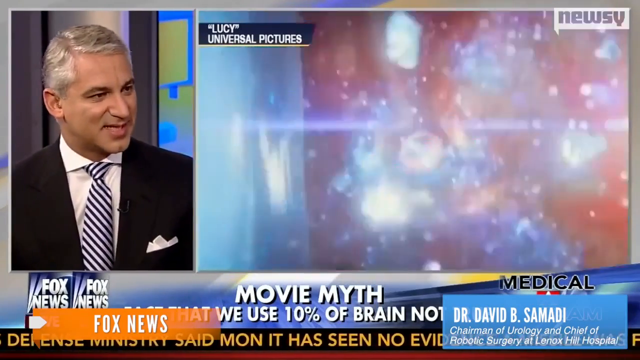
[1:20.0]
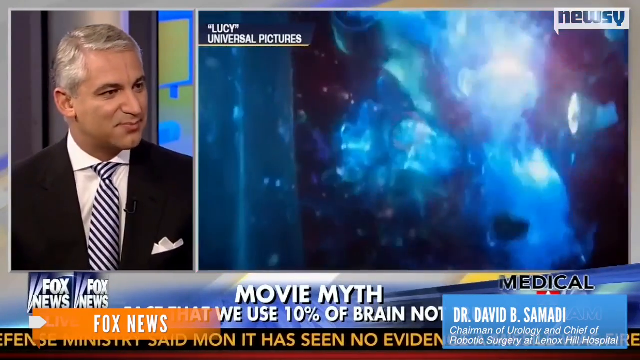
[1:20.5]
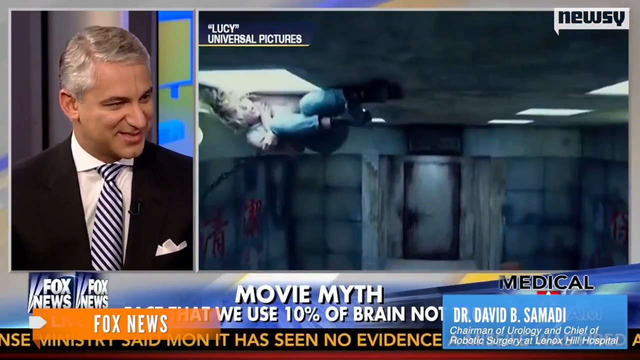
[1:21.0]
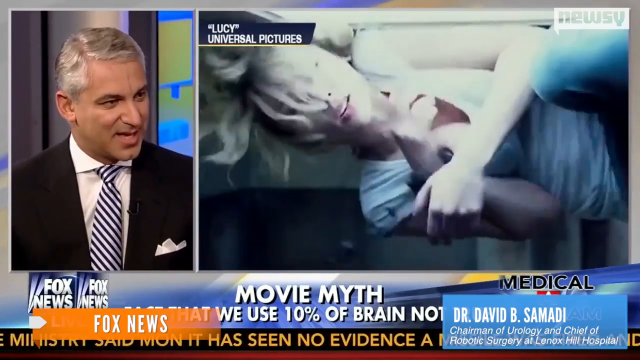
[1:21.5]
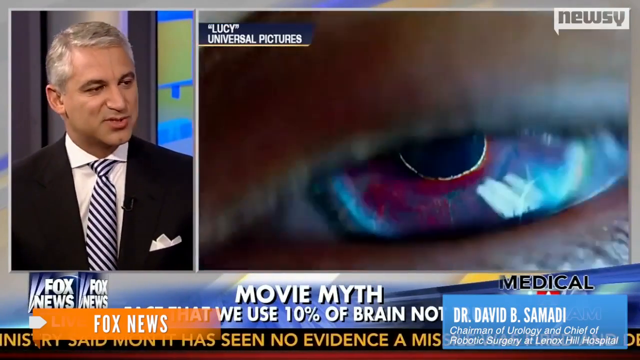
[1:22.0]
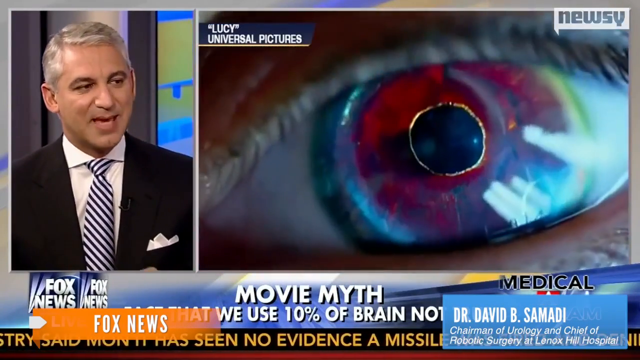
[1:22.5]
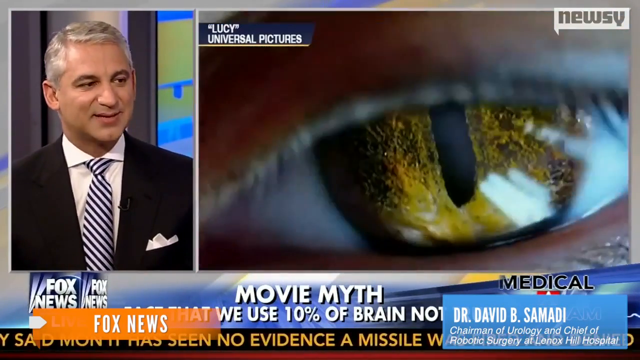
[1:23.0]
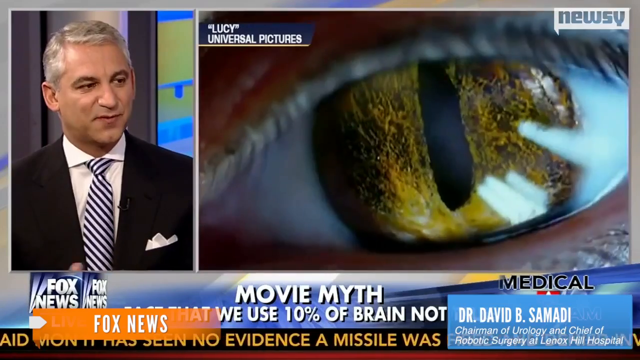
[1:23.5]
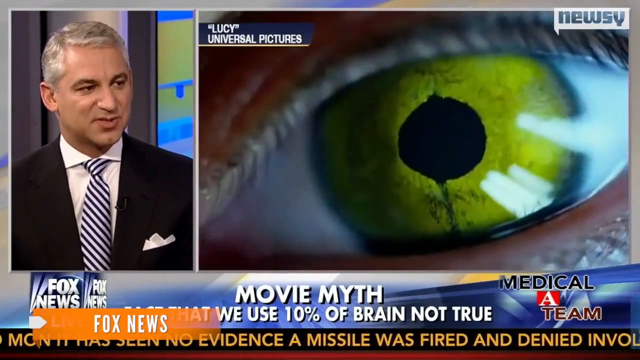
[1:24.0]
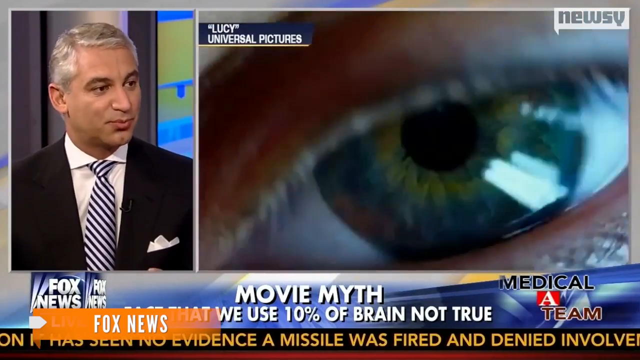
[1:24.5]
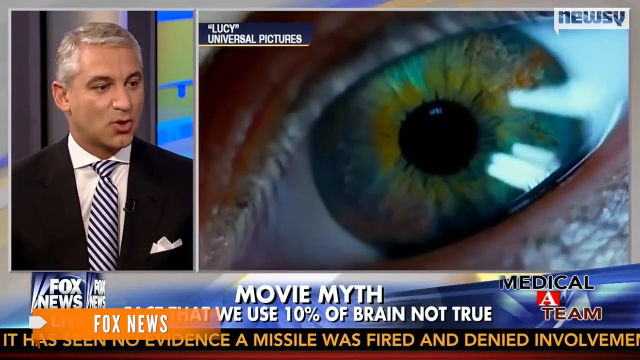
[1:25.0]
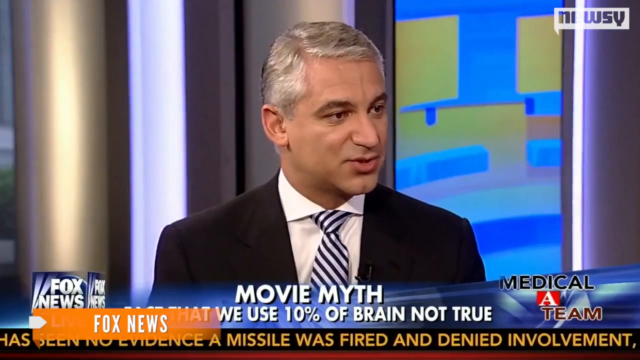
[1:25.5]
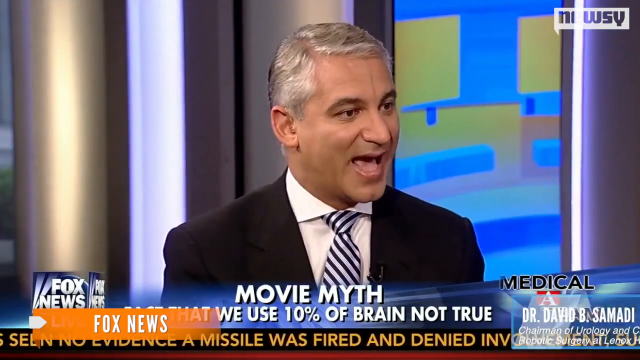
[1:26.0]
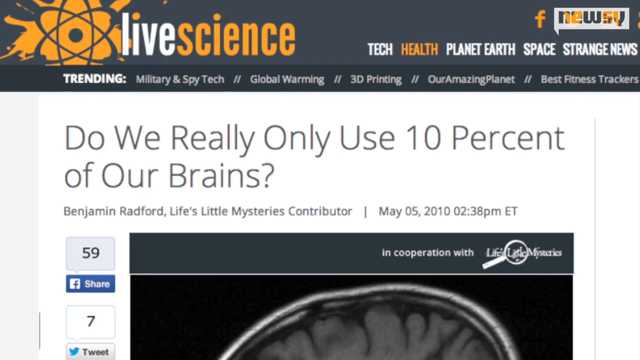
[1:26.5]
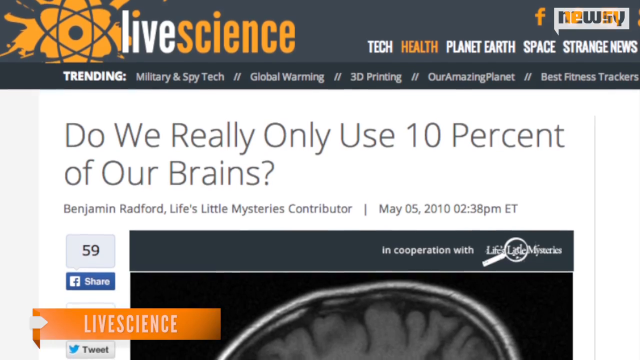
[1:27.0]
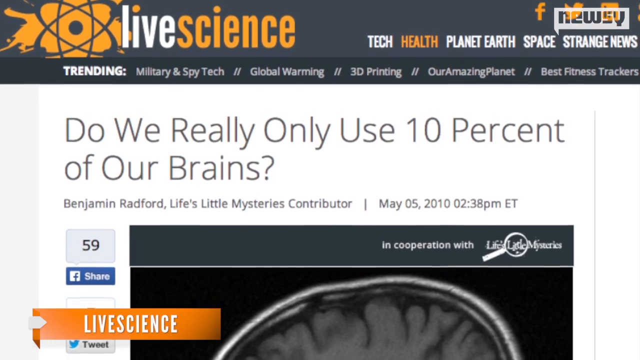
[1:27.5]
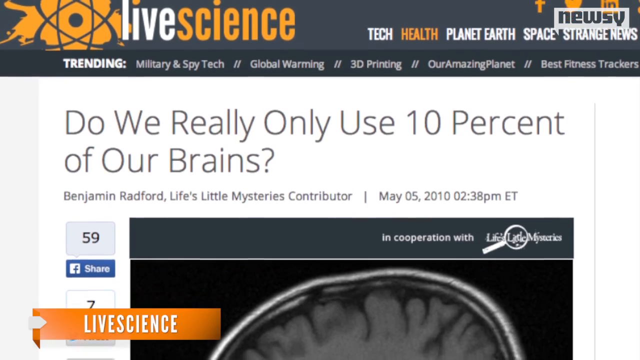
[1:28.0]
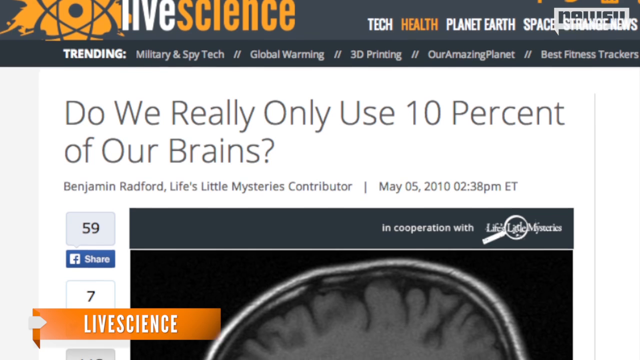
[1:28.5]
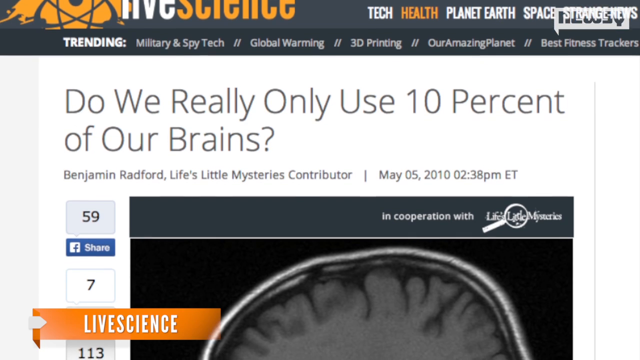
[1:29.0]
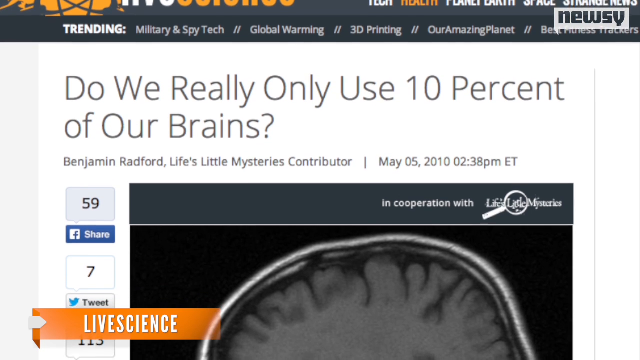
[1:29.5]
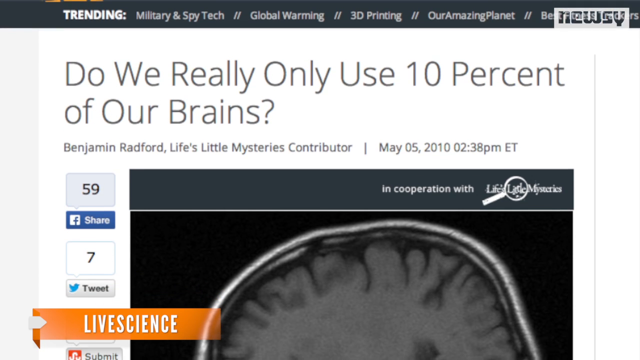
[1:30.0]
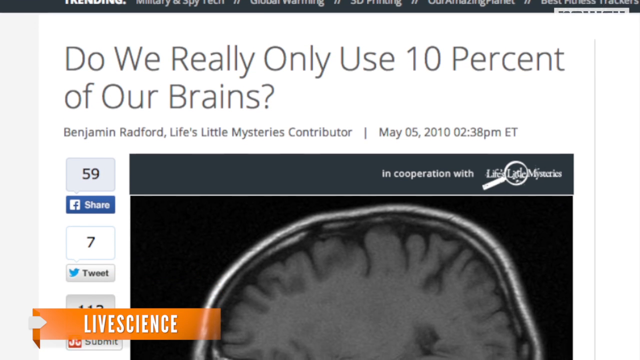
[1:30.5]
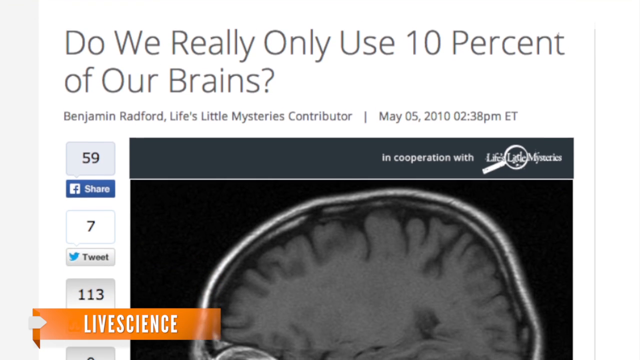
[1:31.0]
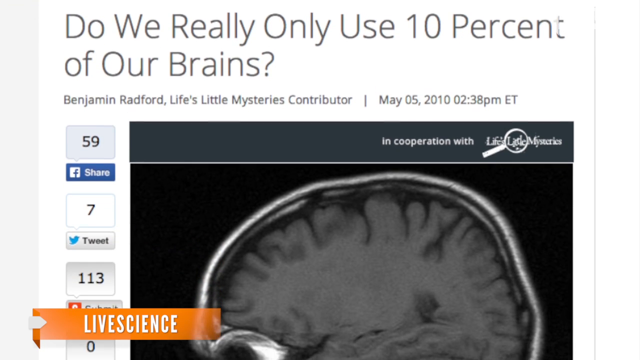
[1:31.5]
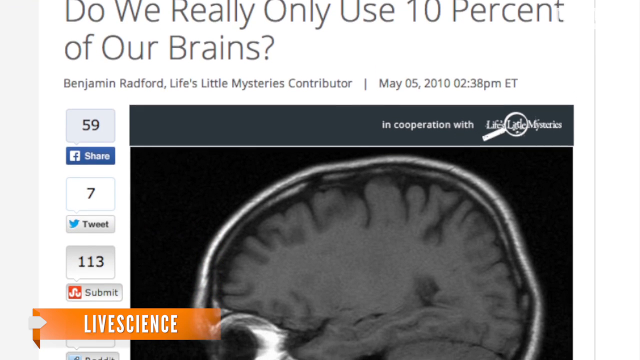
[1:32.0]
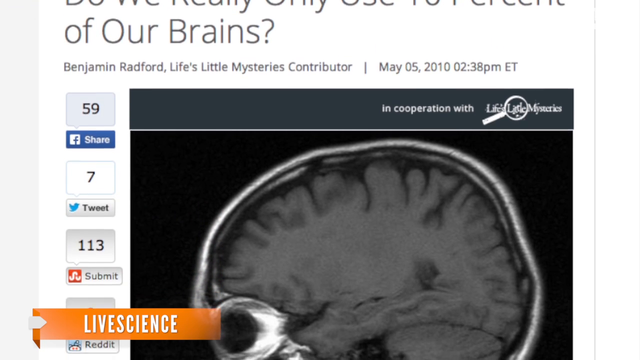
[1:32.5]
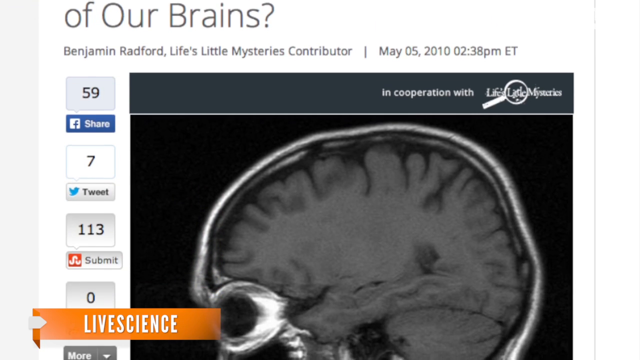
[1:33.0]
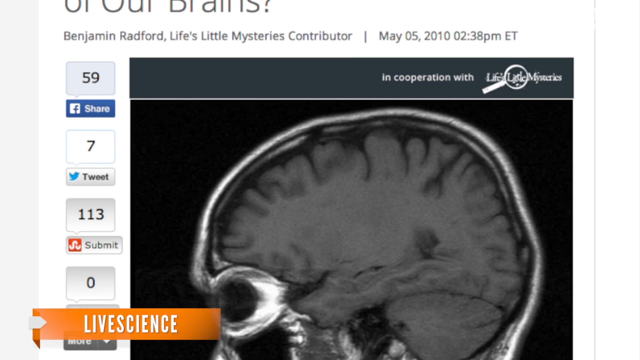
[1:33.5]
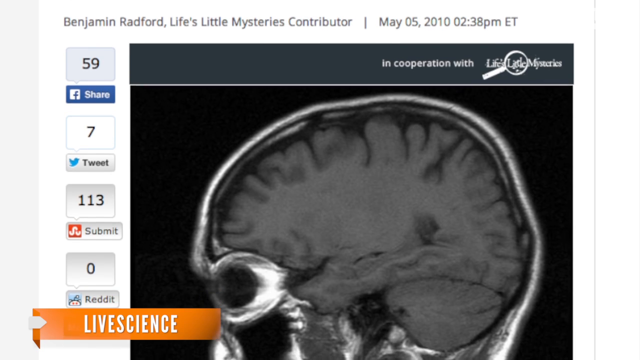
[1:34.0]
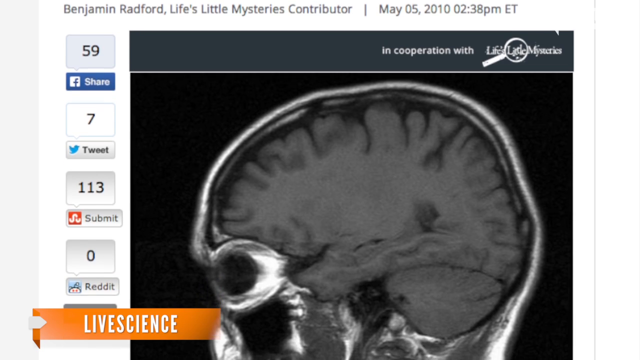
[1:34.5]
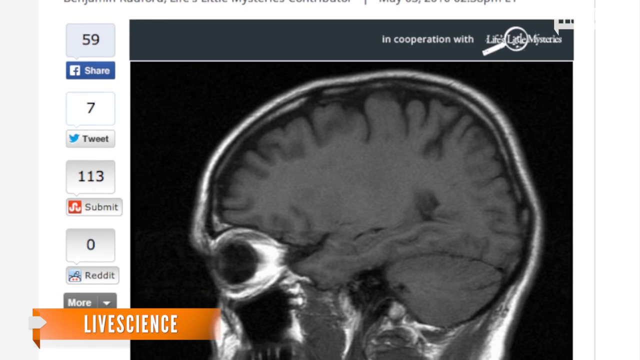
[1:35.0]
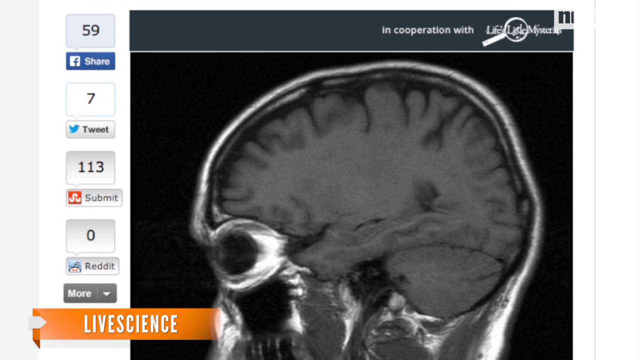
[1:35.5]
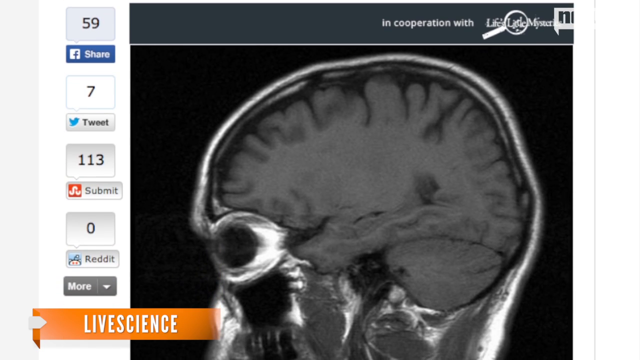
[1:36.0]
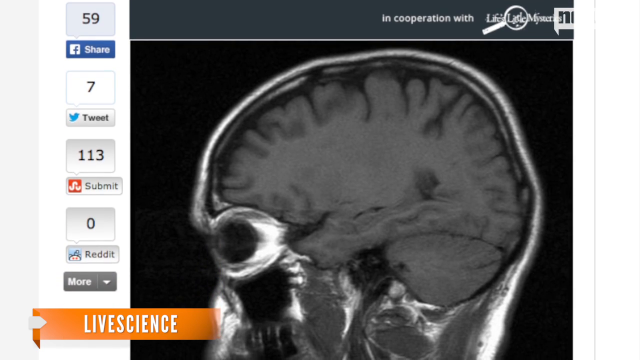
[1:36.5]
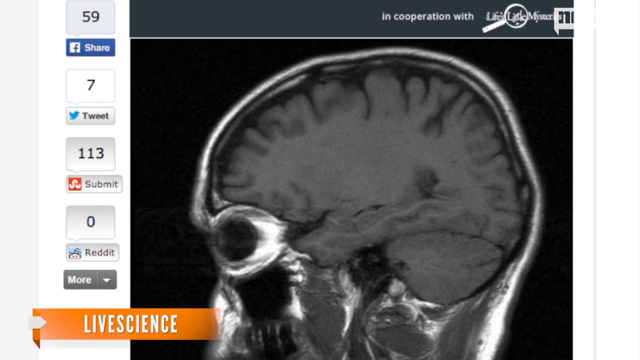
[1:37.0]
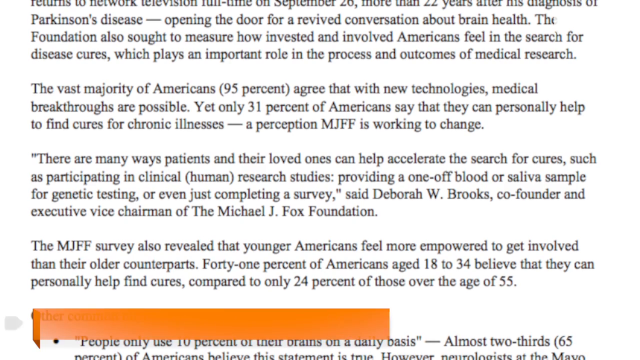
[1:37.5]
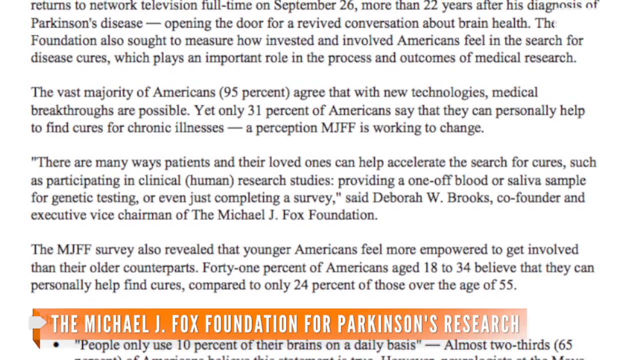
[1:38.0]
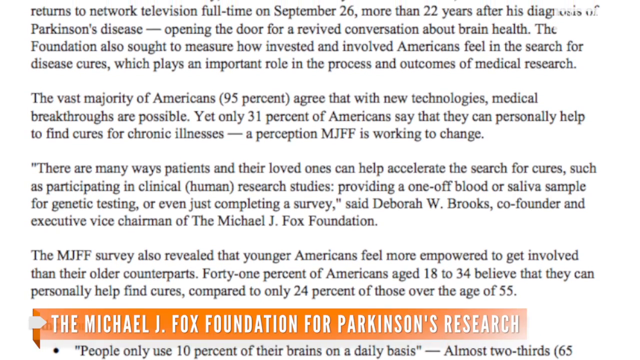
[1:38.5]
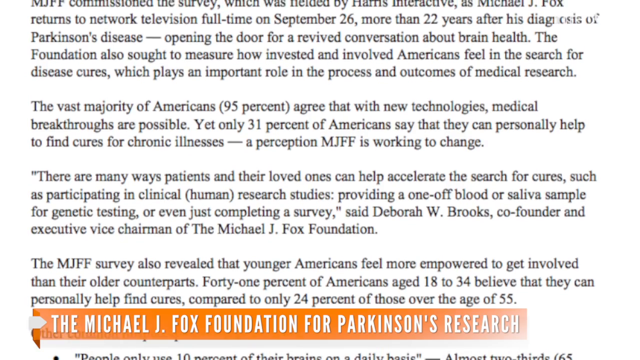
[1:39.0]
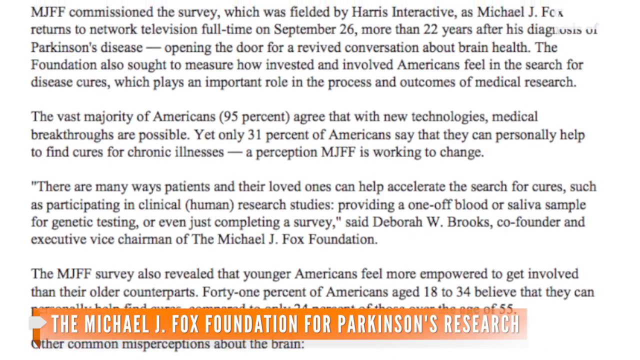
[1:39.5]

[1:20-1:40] A Fox News segment opens with a newscaster on the left who has gray hair and wears a dark navy suit, a white shirt and a pinstripe tie. The story is about the brain and shows an article that reads "do we really use only 10% of our brains?" by Benjamin Radford, dated May 5, 2010, 2.38 PM Eastern time. The video scrolls downward to an image of the human brain and skull. An orange banner then scrolls out from the lower left, reading "The Michael J. Fox..." As it scrolls down, it goes into an article in black text against a white background, which reads "Muff commissioned the survey which was fielded by Harris Interactive as Michael J. Fox returns to network television full-time on September 26th, more than 22 years after his diagnosis of Parkinson's disease. Opening the door for a revived conversation about brain health, the foundation also sought to measure how invested and involved Americans feel"